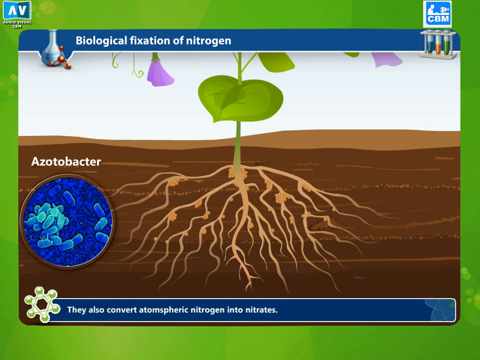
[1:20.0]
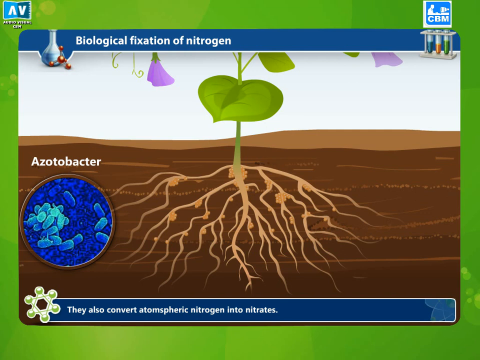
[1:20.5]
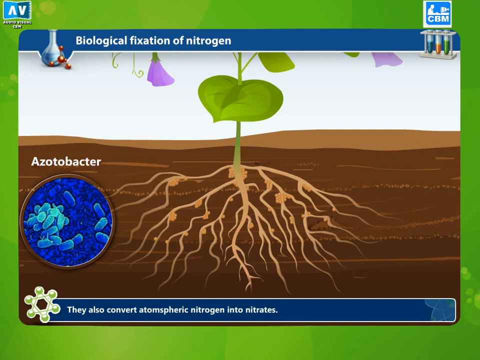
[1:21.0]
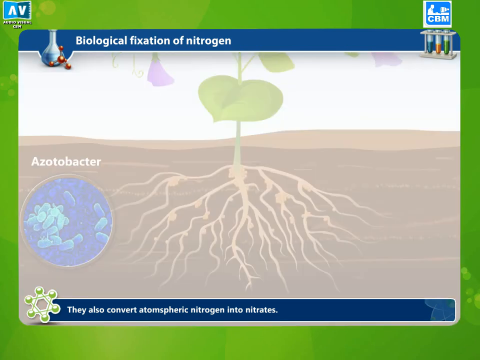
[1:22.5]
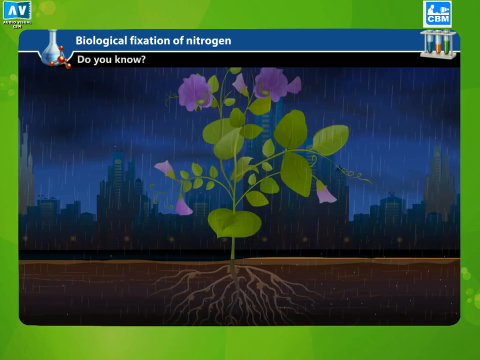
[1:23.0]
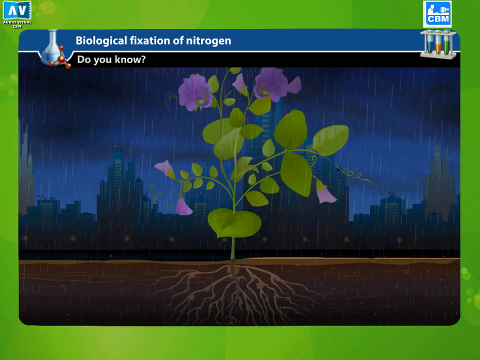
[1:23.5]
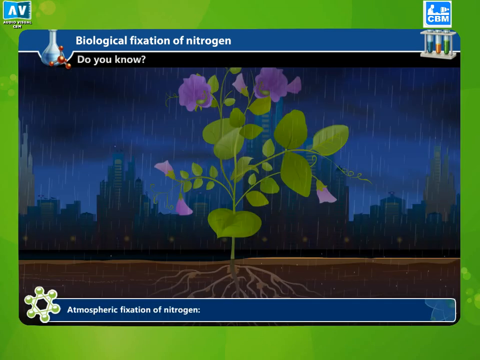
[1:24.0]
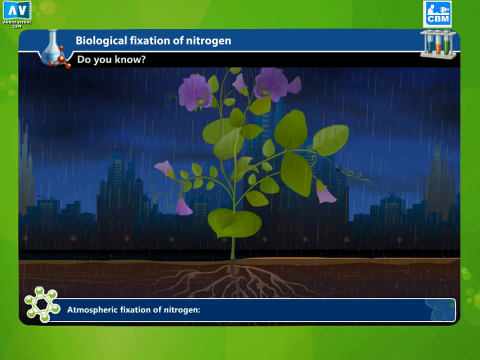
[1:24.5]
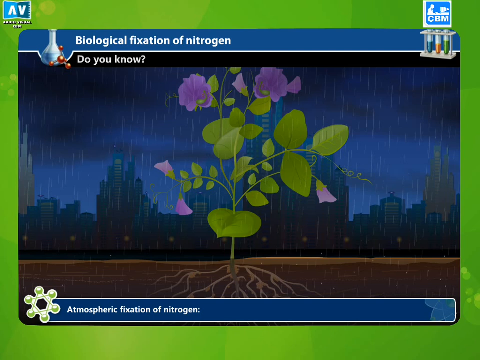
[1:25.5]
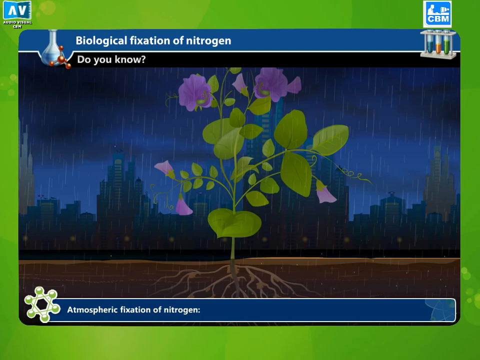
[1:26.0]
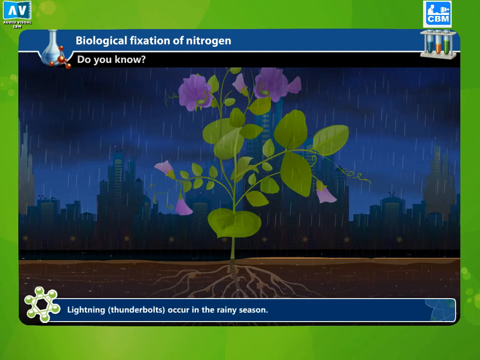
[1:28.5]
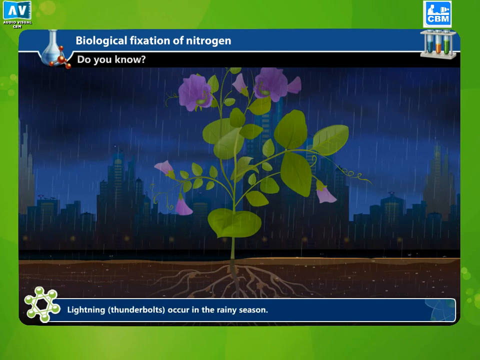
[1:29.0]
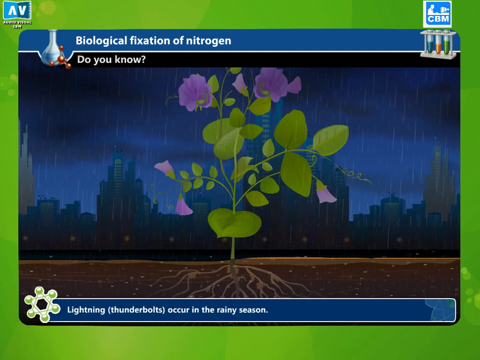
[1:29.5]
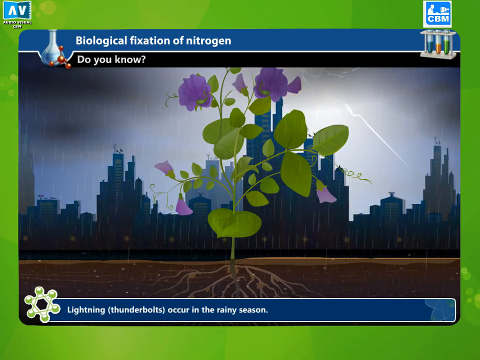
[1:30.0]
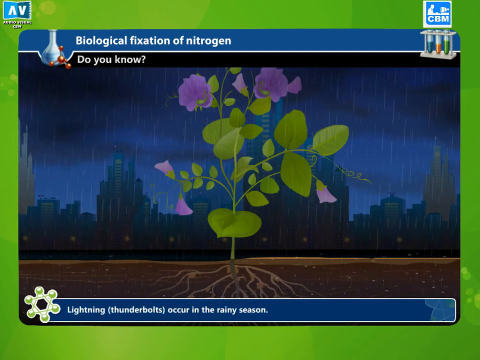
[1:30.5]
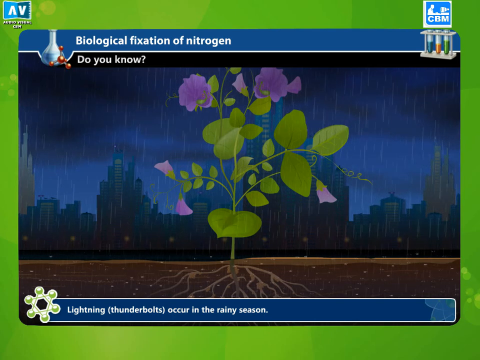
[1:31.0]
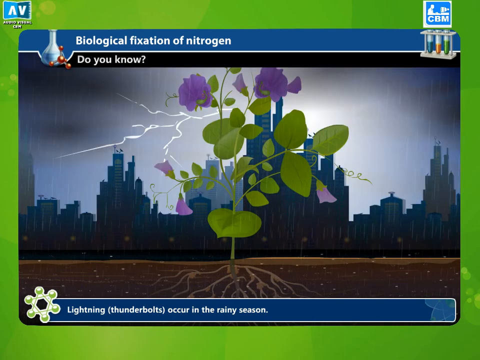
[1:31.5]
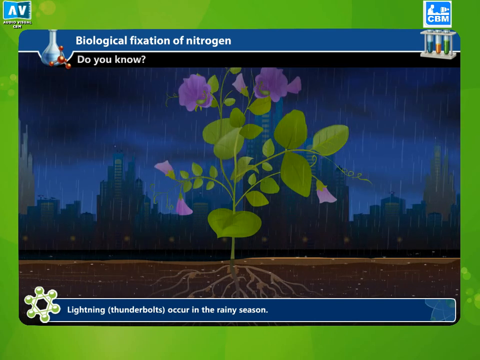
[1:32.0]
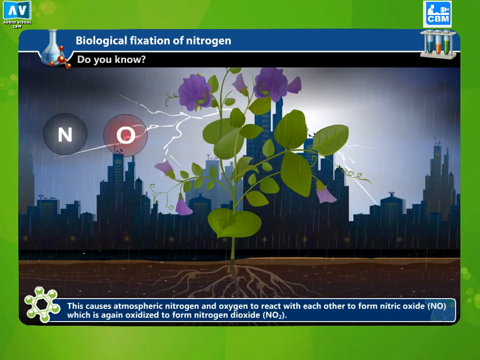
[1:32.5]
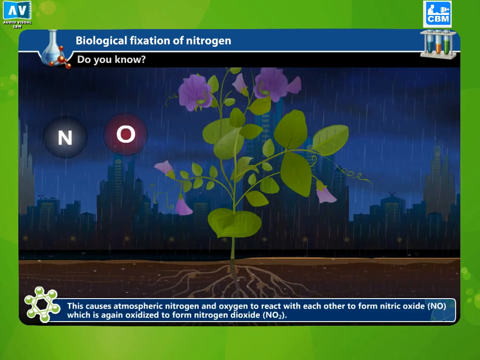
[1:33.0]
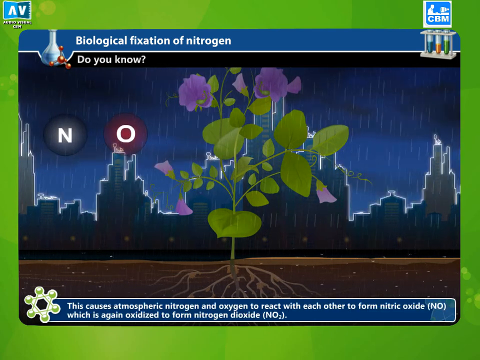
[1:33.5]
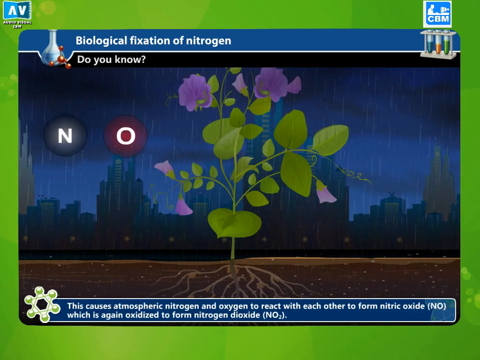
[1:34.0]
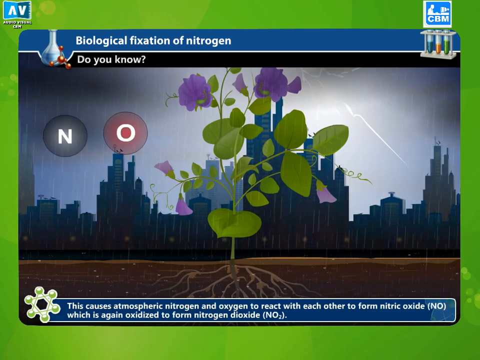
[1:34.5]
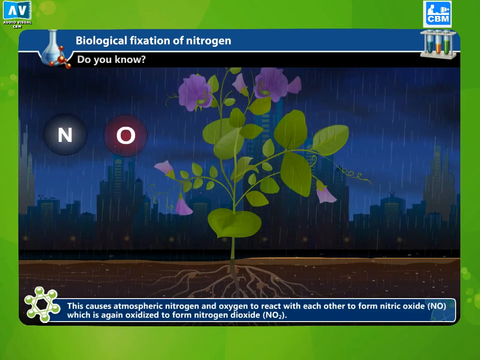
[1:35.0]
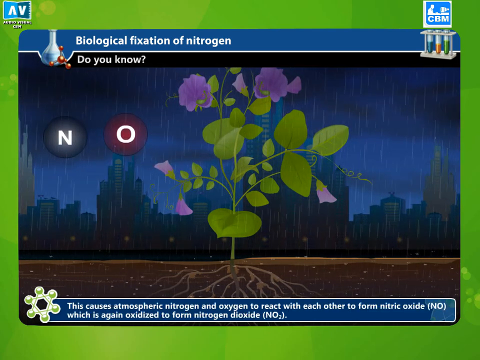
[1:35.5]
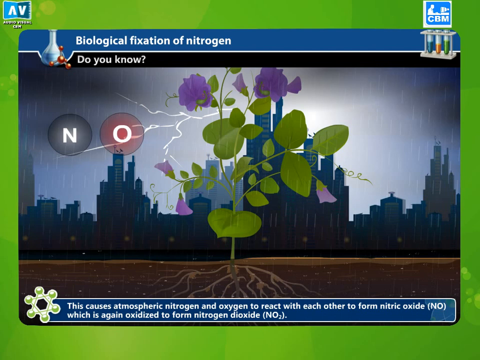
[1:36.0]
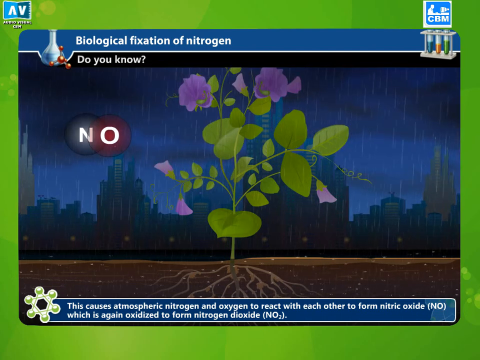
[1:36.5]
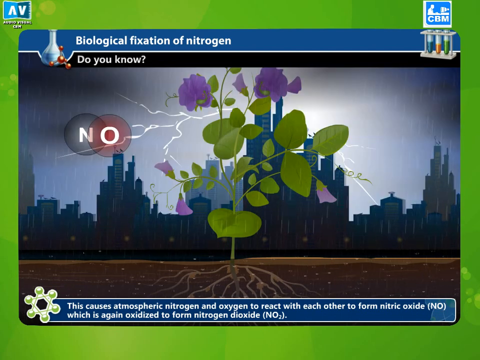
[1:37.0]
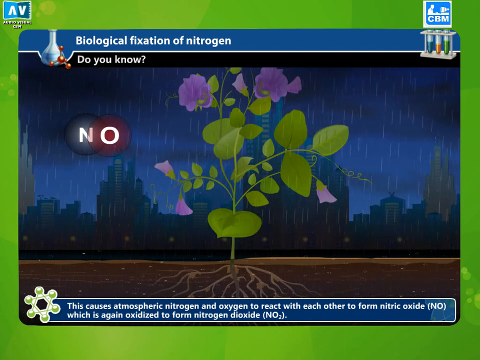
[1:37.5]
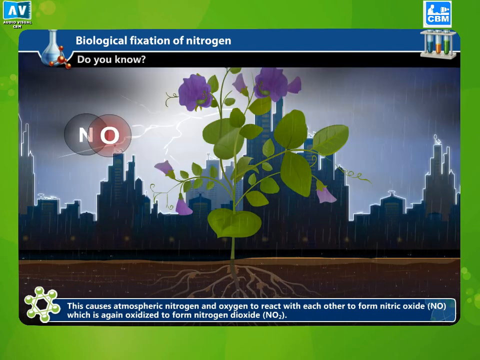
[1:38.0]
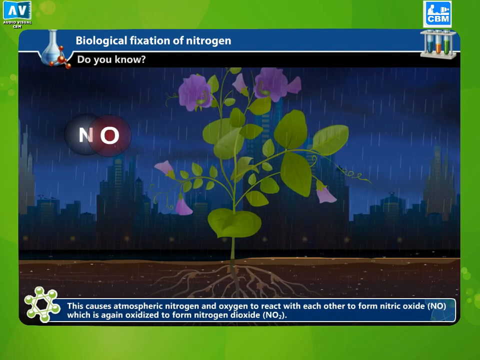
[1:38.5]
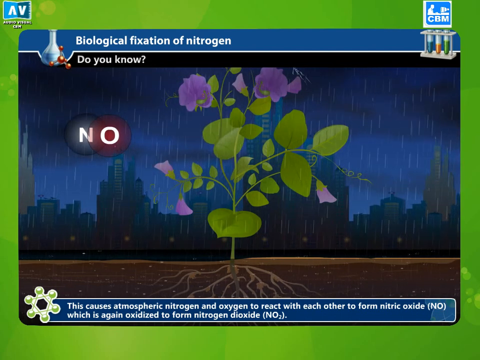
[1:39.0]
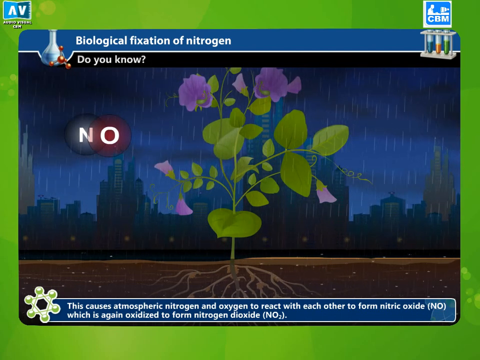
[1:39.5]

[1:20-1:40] A cartoonish illustration shows dirt with roots attached to a plant that is green with purple flowers. A green border surrounds the illustration. There are two blue banners, one at the top above the illustration and one at the bottom. The top banner has white text reading "biological fixation of nitrogen." The bottom banner's white text reads "they also convert atmospheric nitrogen into nitrates." At the very top left of the screen are the letters A-V, and at the very top right are the letters CBM. Below the CBM are three vials in a holder: one with a dark green fluid, one with an orange fluid, and one with a regular green fluid. To the left of the roots underground, a circle shows some kind of blue things, with white text above them reading "azotobacter."